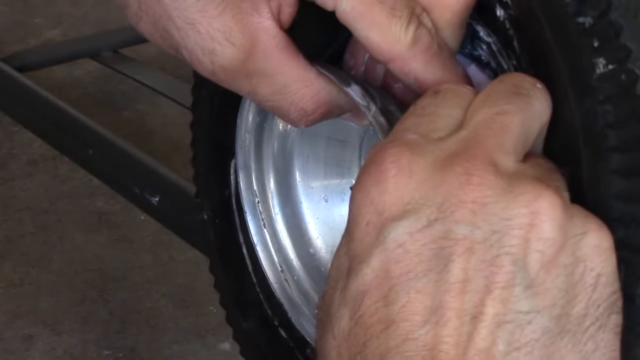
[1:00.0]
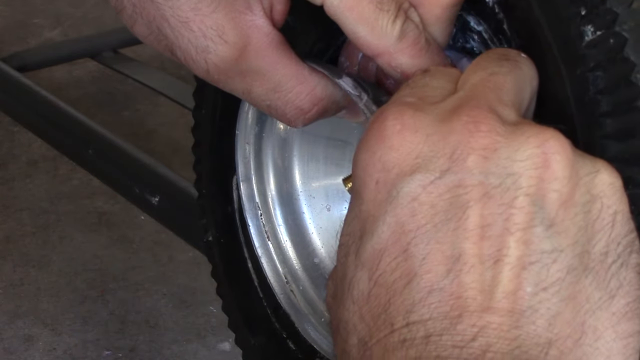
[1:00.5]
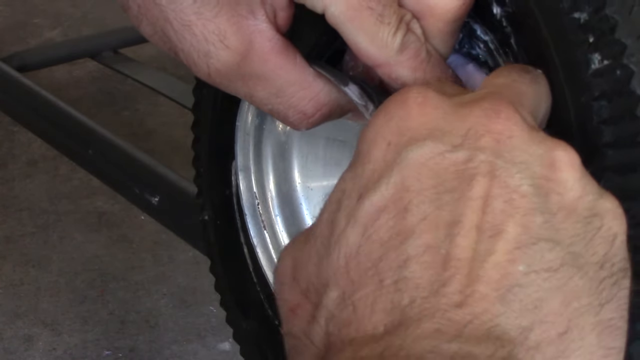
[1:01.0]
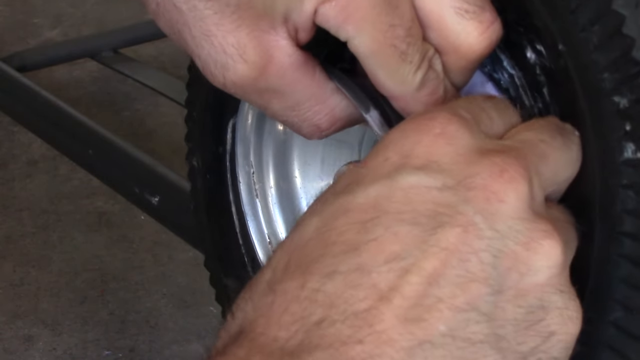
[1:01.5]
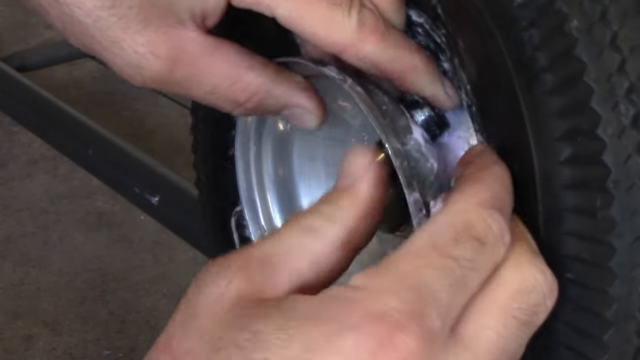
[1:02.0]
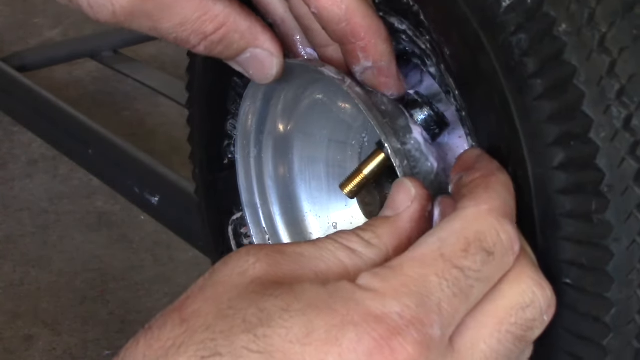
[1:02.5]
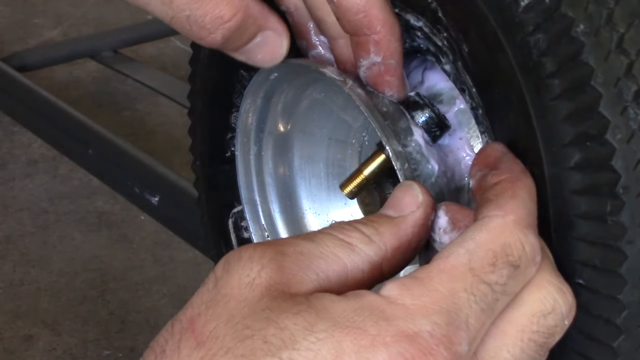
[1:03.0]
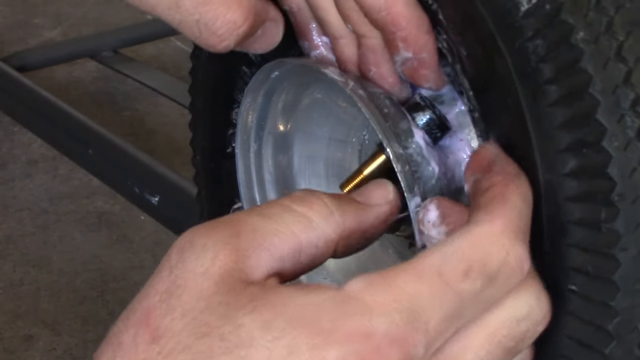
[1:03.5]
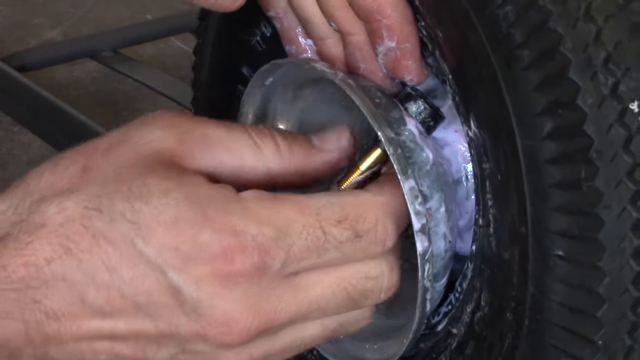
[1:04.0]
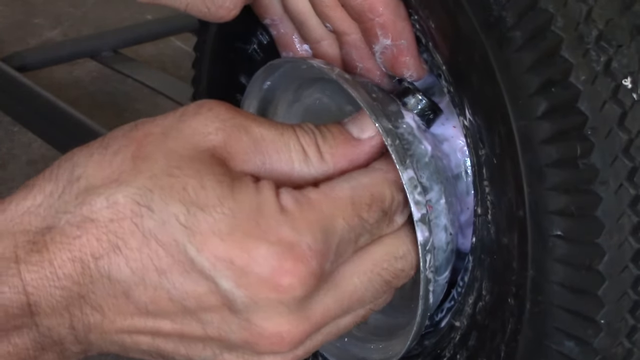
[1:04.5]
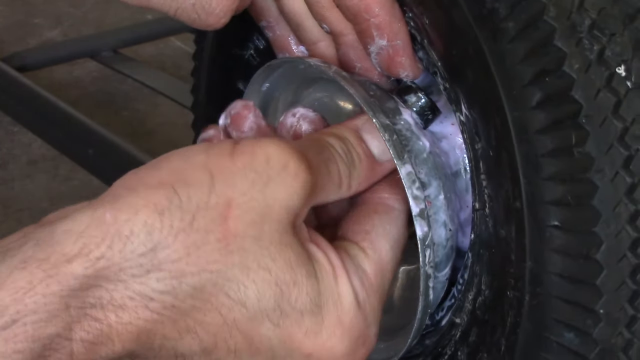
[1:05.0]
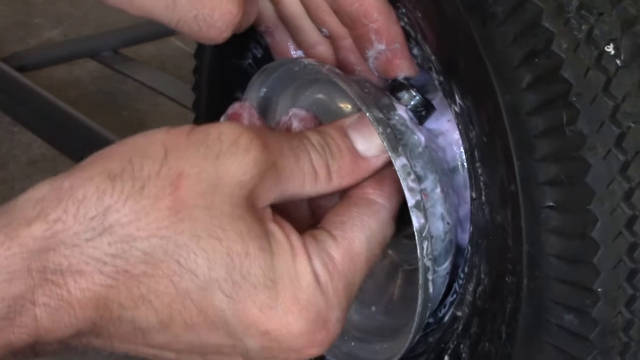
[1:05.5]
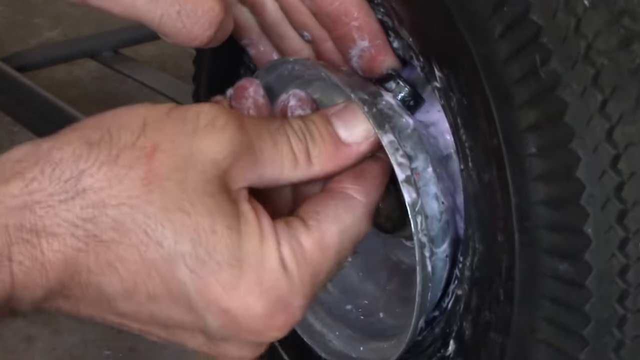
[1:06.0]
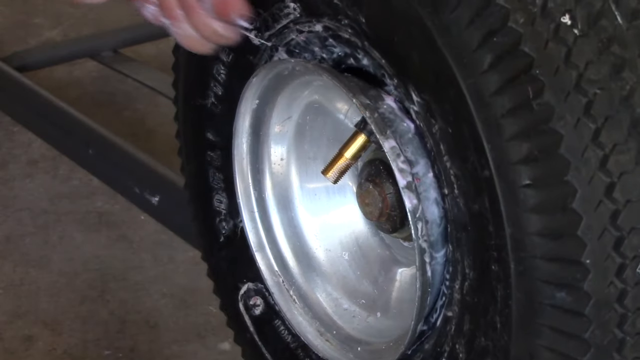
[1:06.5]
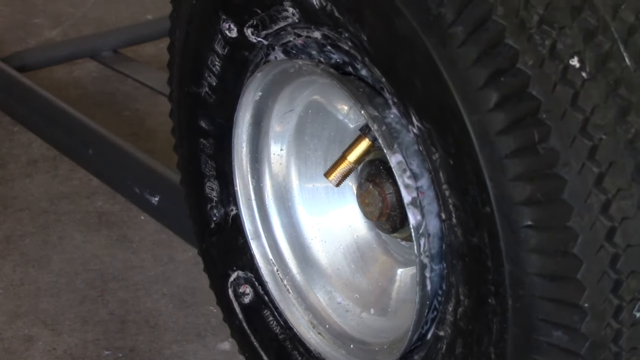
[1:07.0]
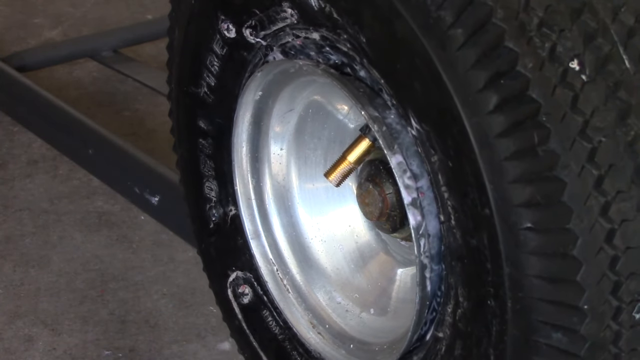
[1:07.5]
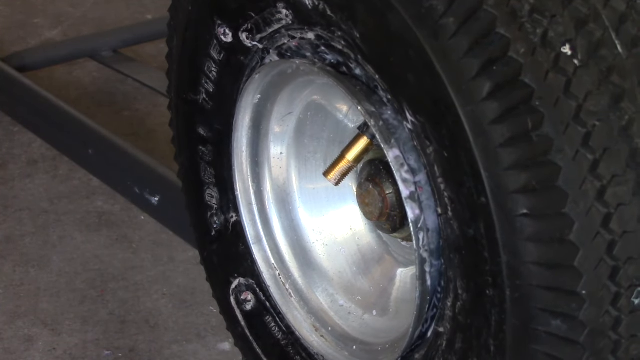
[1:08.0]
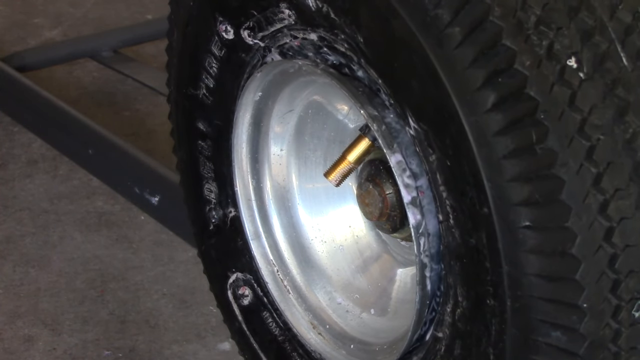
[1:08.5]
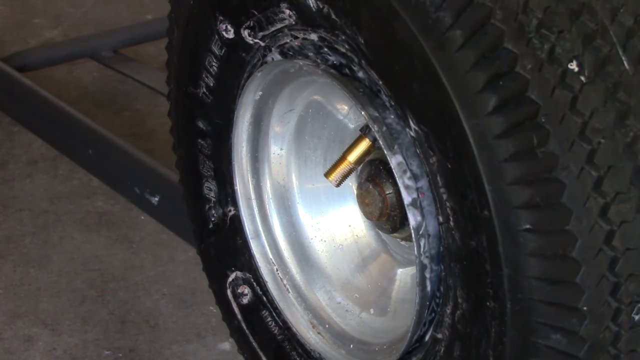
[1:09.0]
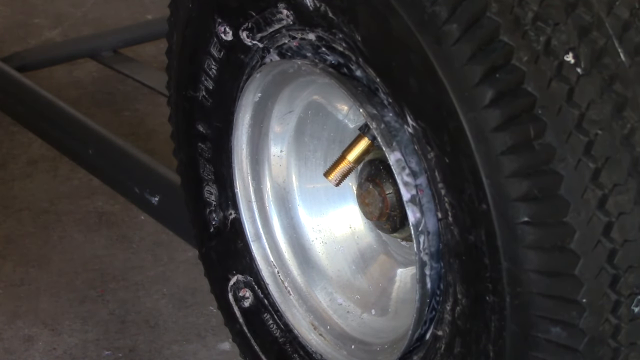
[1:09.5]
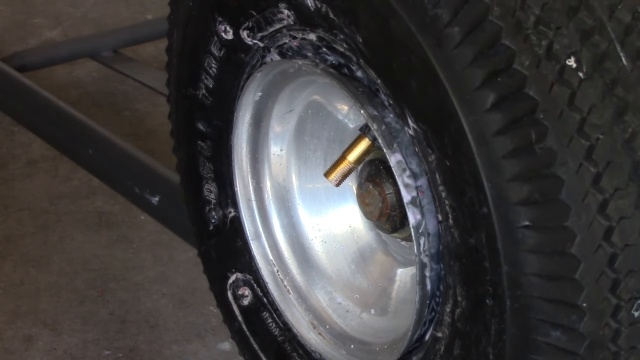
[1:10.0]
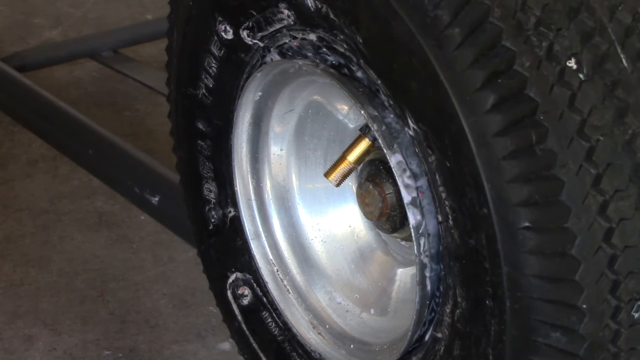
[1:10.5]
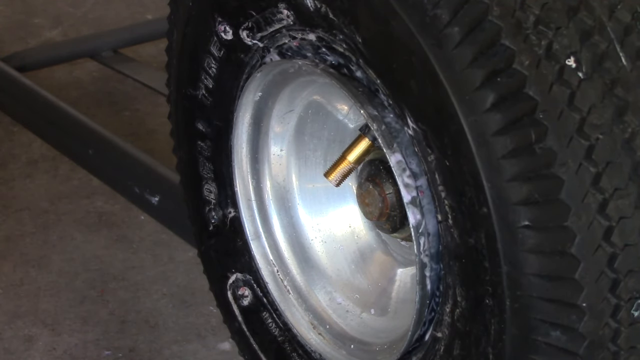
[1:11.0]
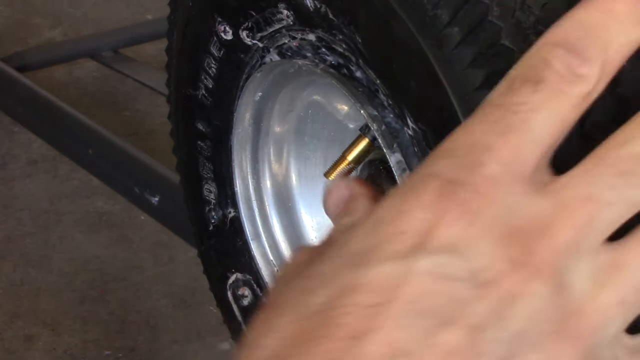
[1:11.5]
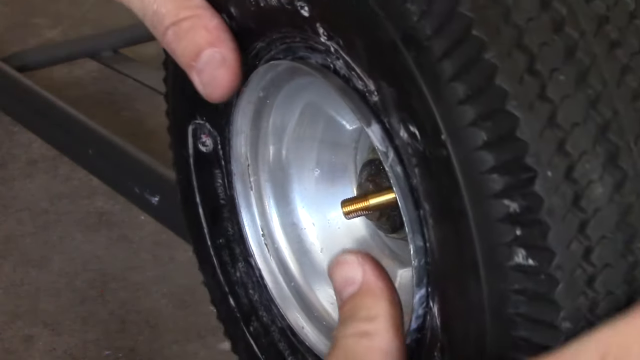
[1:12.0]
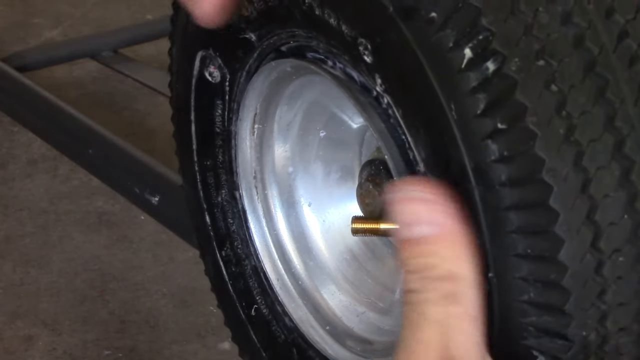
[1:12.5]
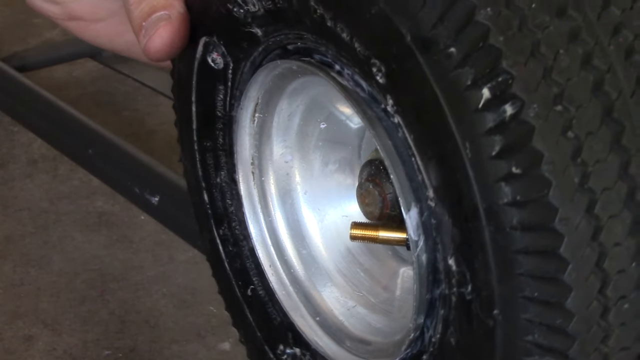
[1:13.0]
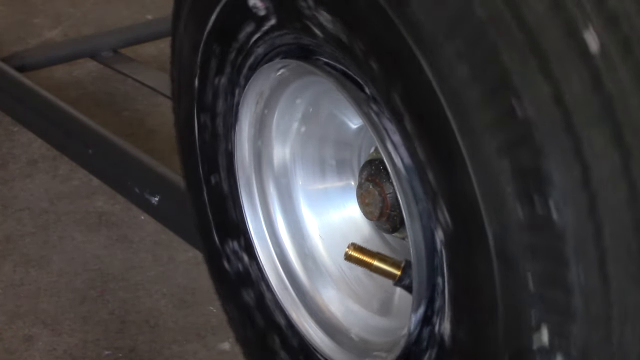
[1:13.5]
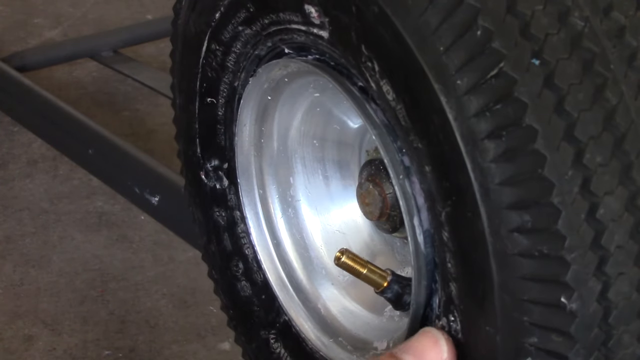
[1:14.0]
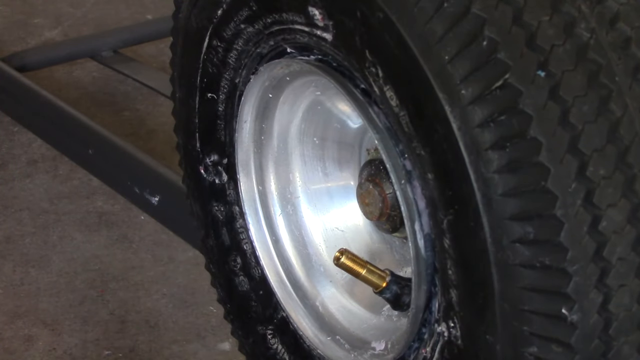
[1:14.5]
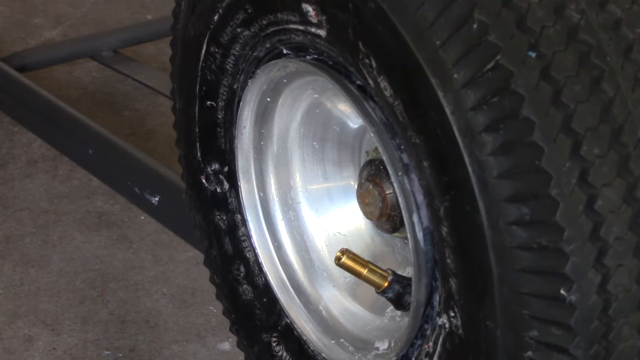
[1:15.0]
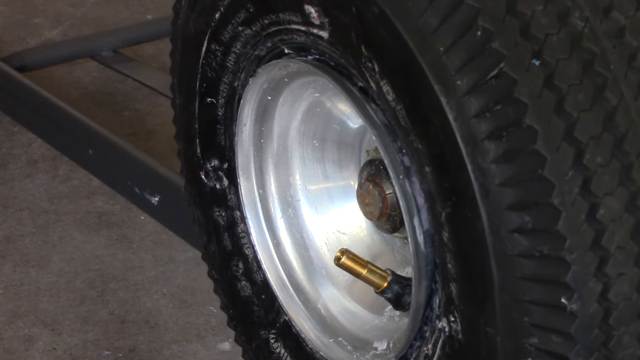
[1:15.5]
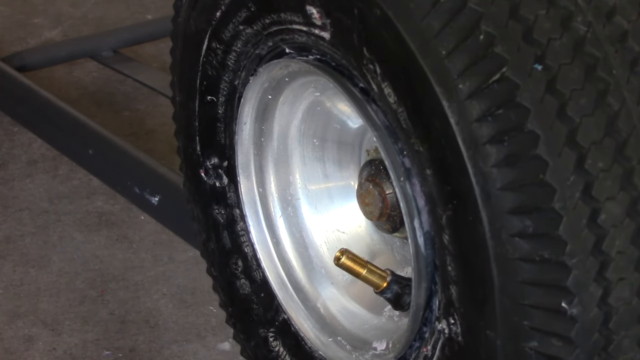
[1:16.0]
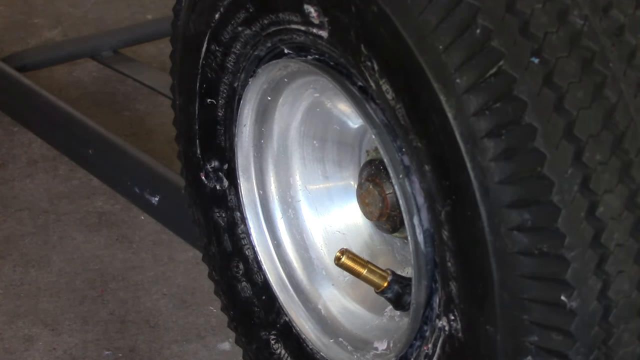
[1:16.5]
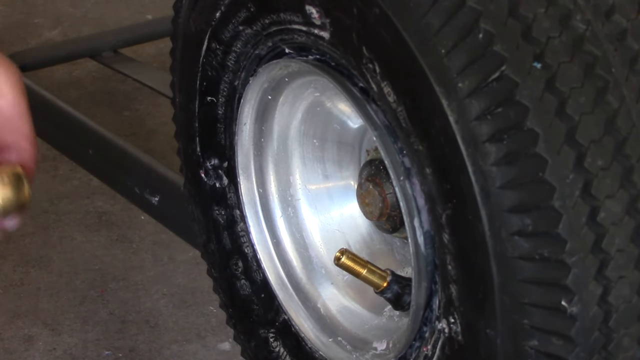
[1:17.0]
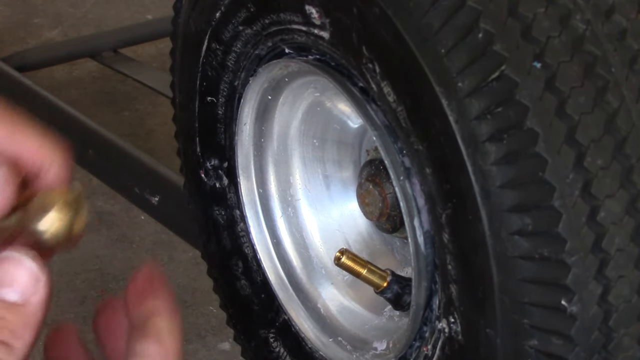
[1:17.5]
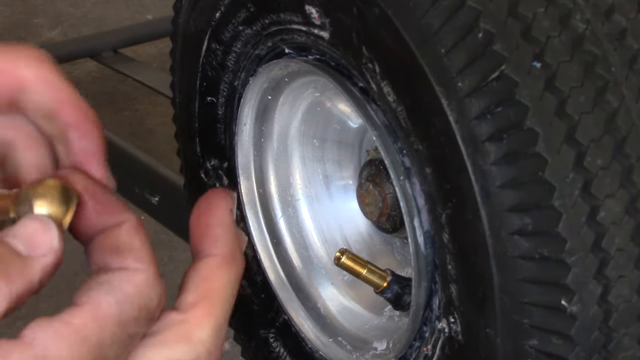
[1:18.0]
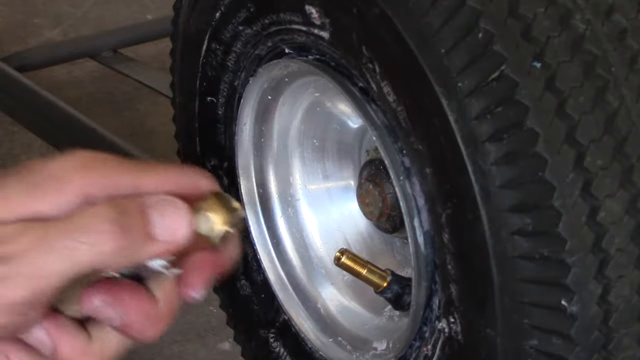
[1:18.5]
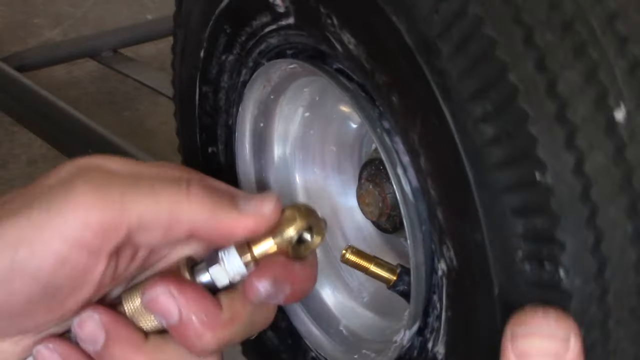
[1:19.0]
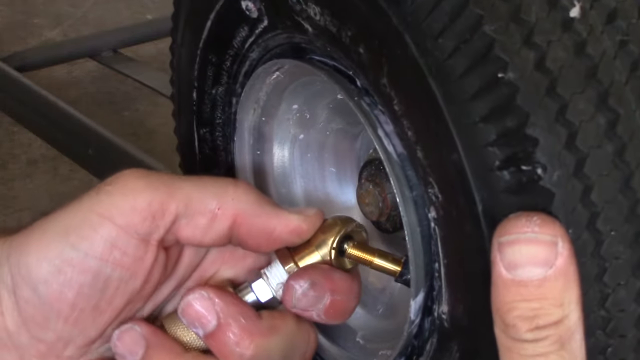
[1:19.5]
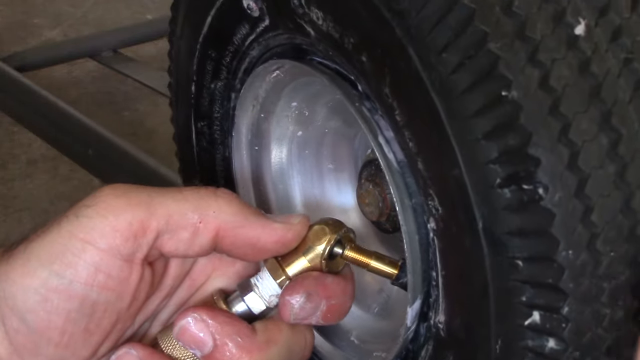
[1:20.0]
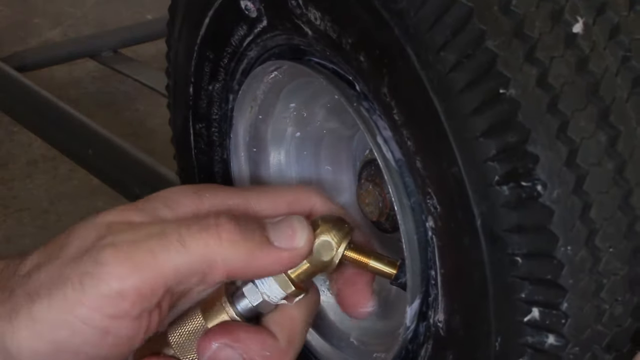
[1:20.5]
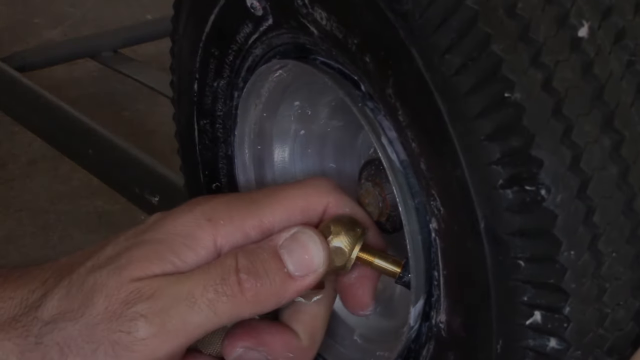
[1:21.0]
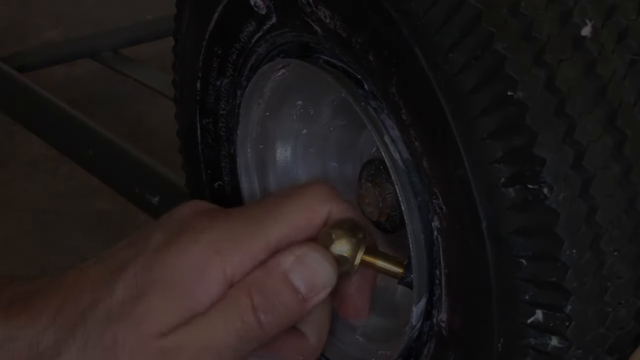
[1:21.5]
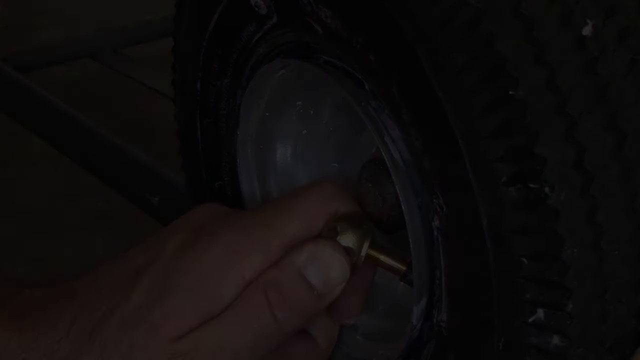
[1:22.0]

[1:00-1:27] The man appears to still be maneuvering the valve stem to make sure it is properly seated in the rim. Once the new replacement valve stem is properly seated in the rim, he pulls with his right hand on the gold metal ribbed or threaded portion of the valve stem to make sure it is sturdy and tightly inserted. He then pulls over a gold metal nozzle attached to a rubber hose connected to an air tank. He looks like he is about to air up the tire he has just placed the valve stem on.